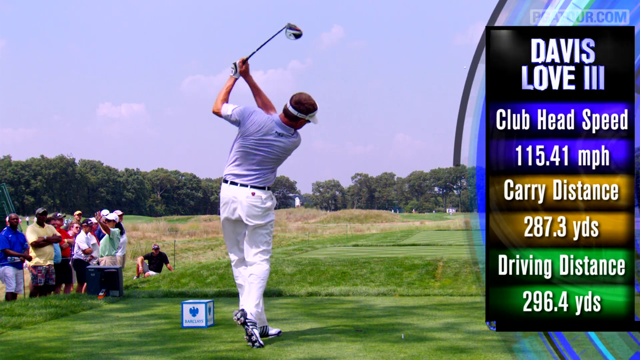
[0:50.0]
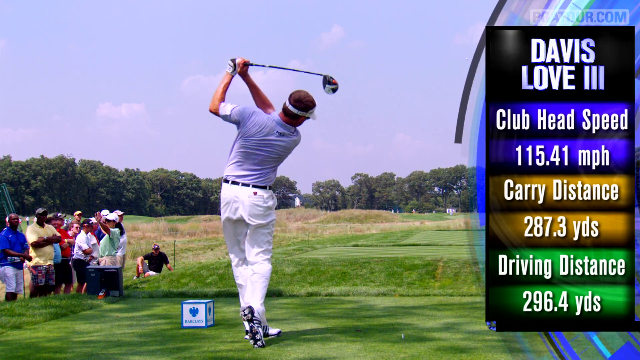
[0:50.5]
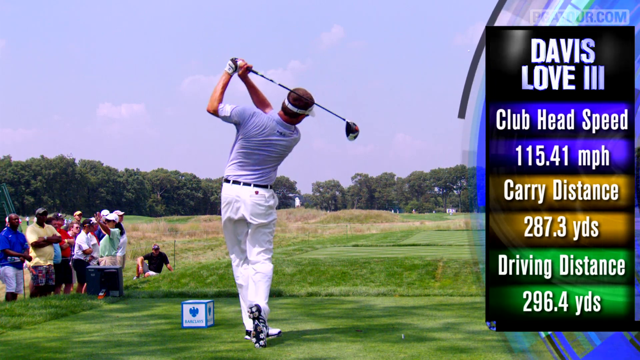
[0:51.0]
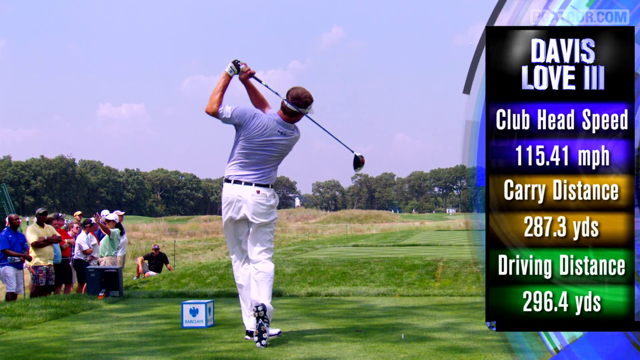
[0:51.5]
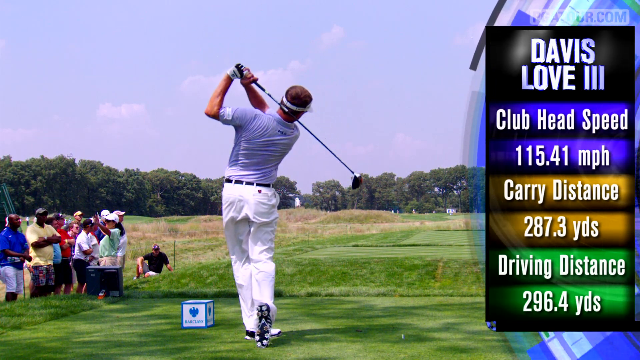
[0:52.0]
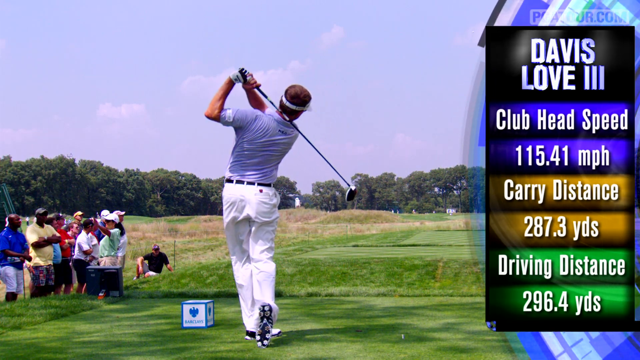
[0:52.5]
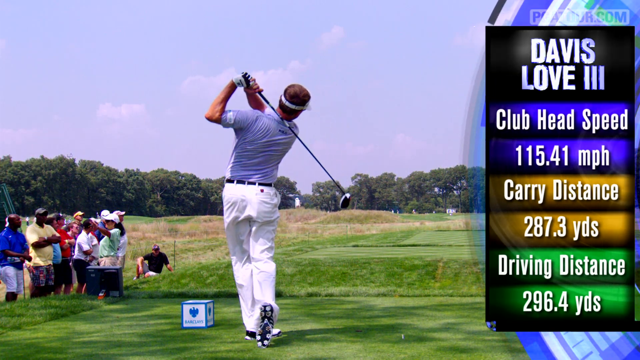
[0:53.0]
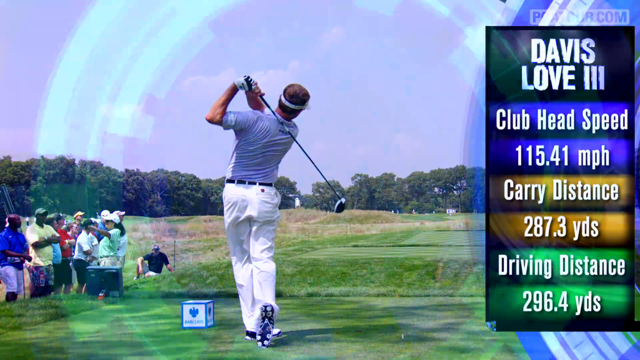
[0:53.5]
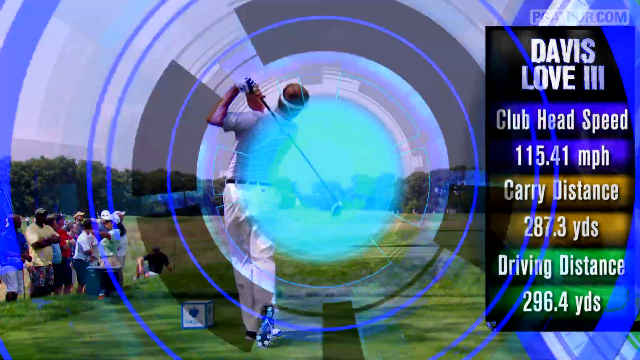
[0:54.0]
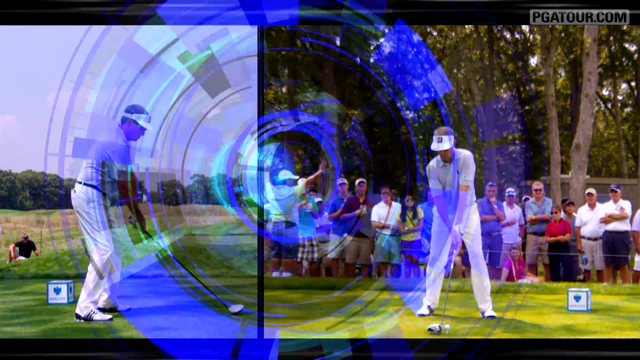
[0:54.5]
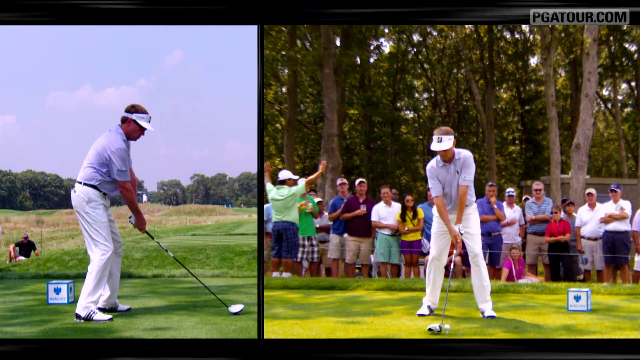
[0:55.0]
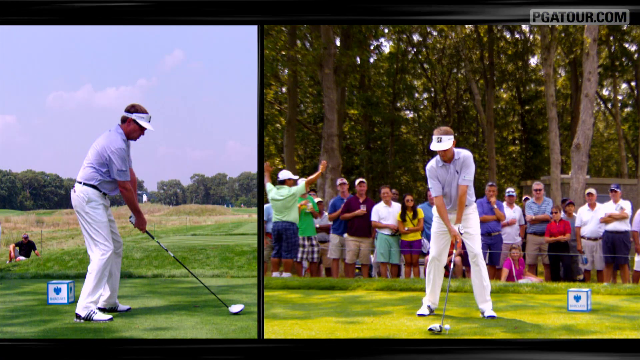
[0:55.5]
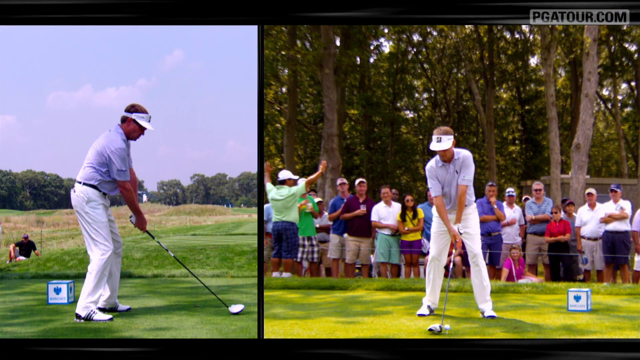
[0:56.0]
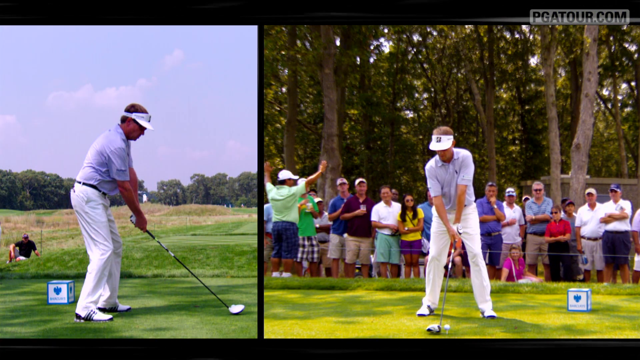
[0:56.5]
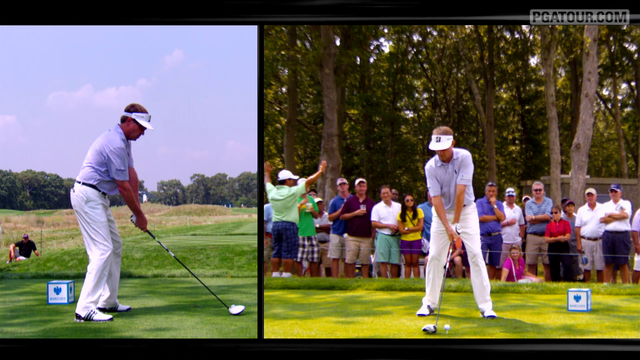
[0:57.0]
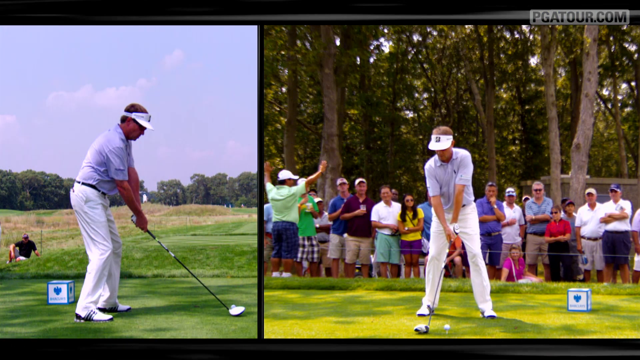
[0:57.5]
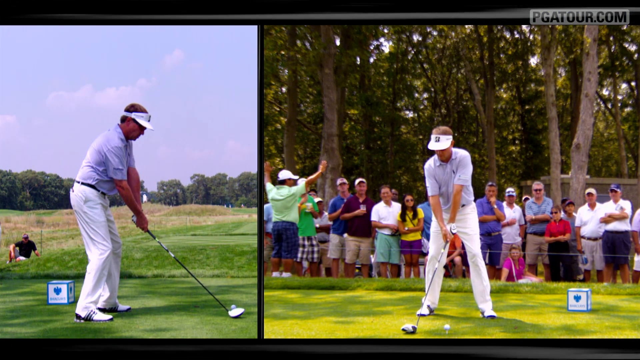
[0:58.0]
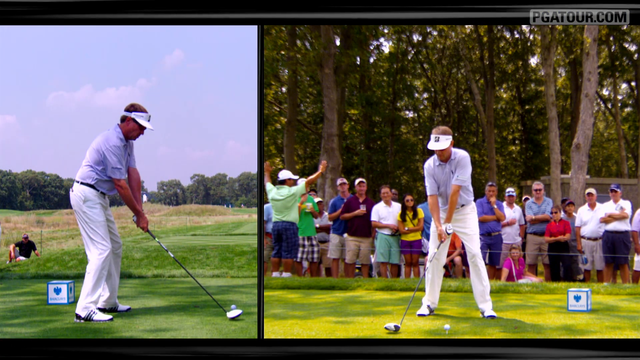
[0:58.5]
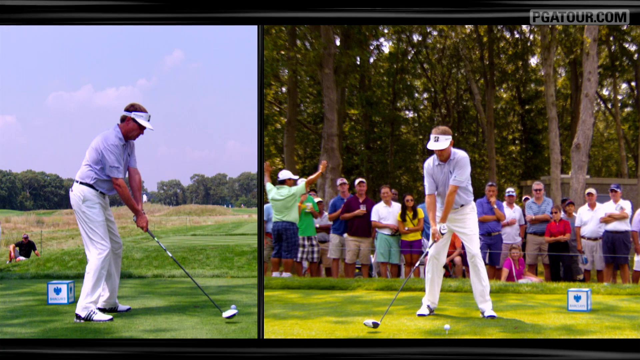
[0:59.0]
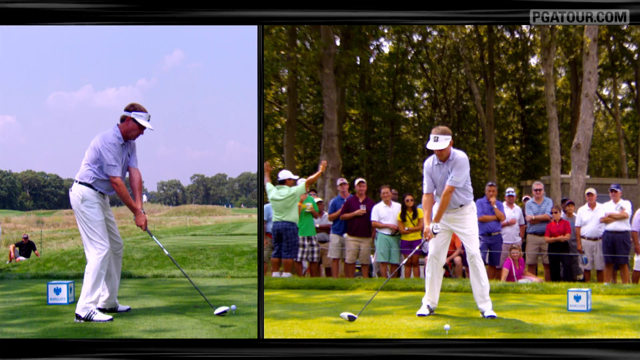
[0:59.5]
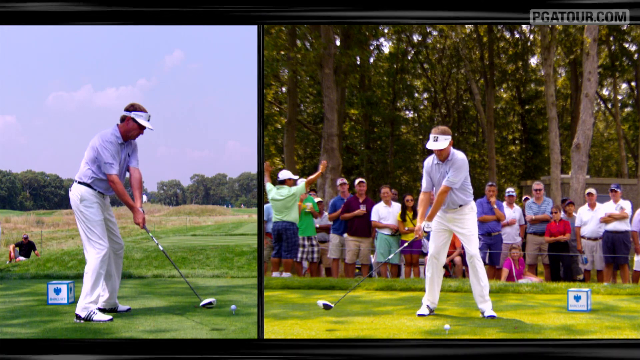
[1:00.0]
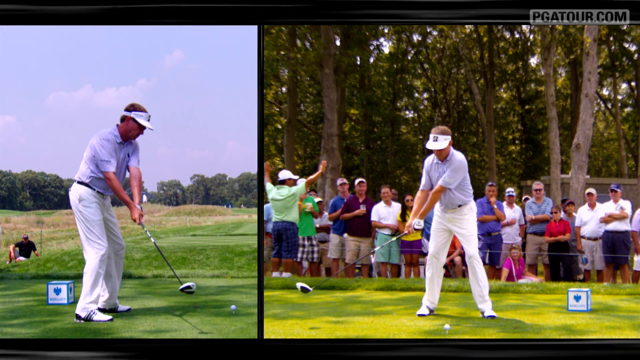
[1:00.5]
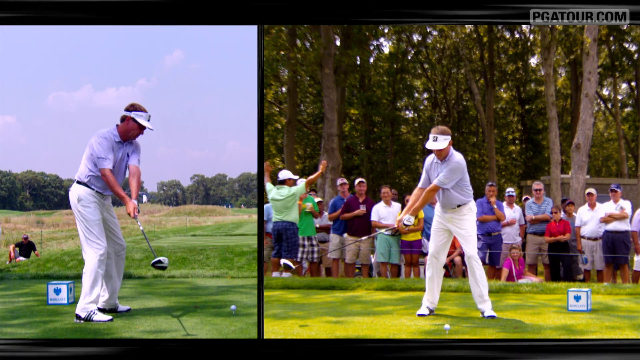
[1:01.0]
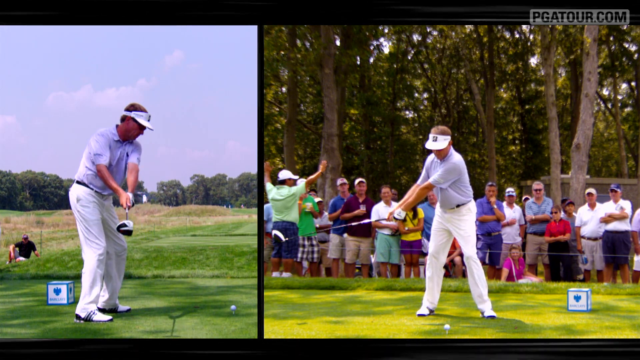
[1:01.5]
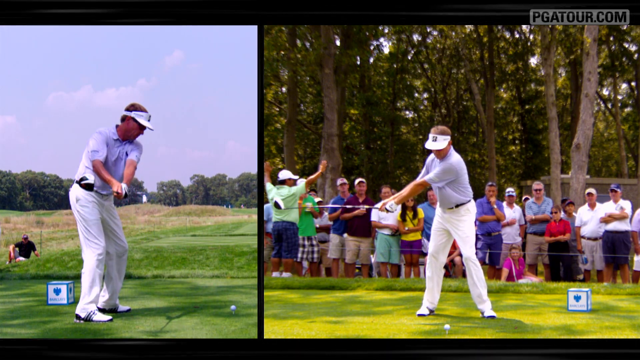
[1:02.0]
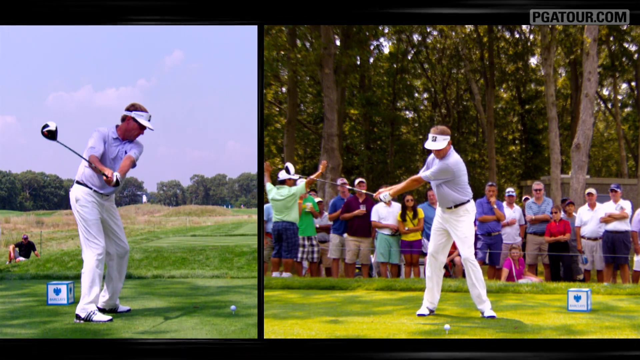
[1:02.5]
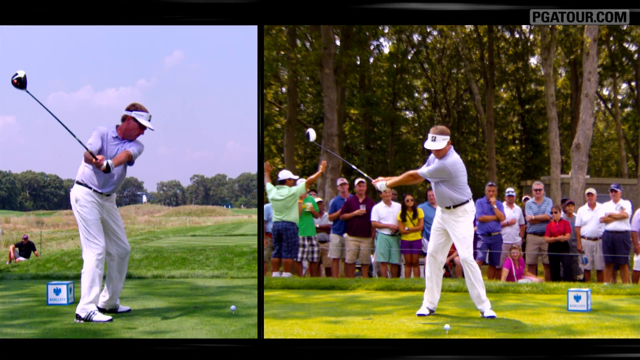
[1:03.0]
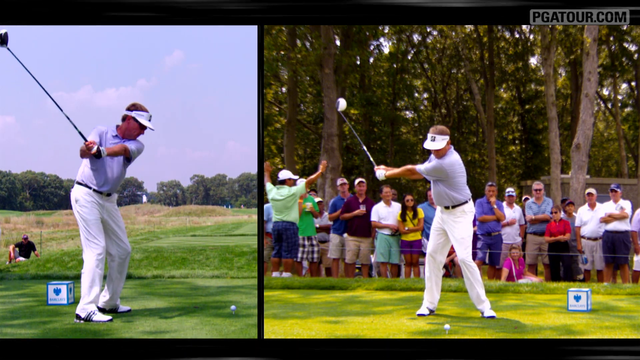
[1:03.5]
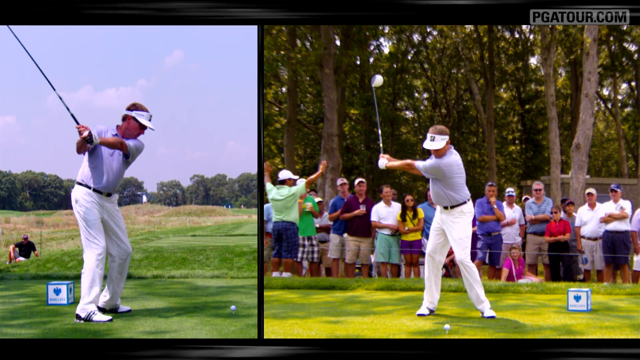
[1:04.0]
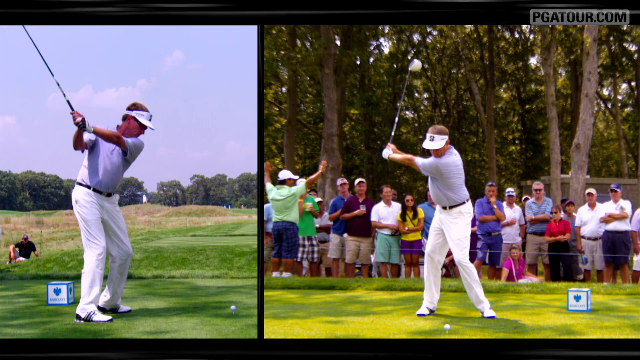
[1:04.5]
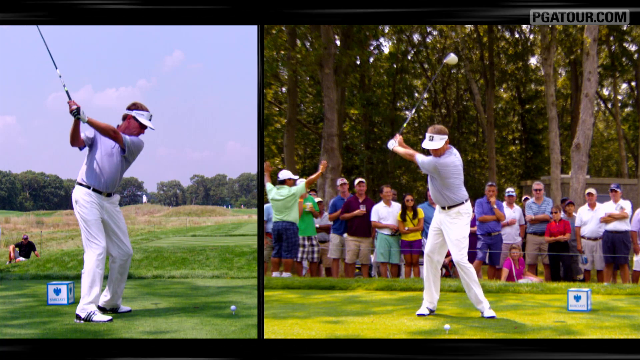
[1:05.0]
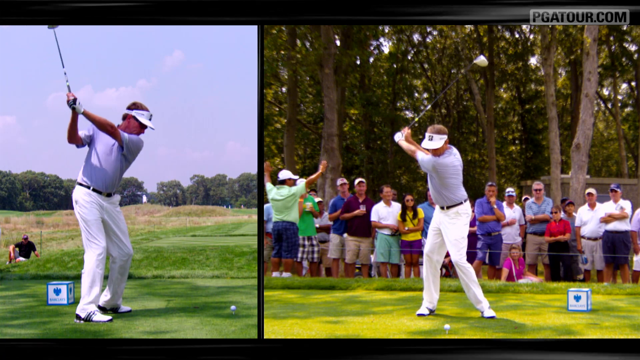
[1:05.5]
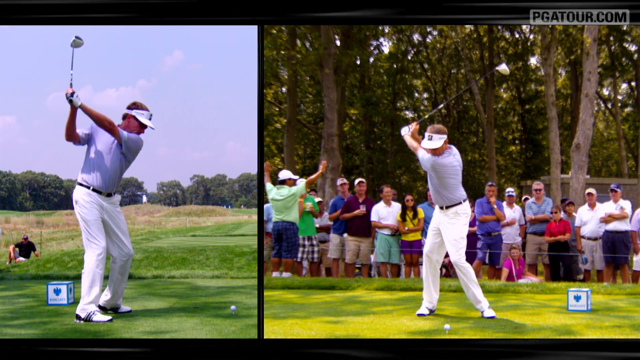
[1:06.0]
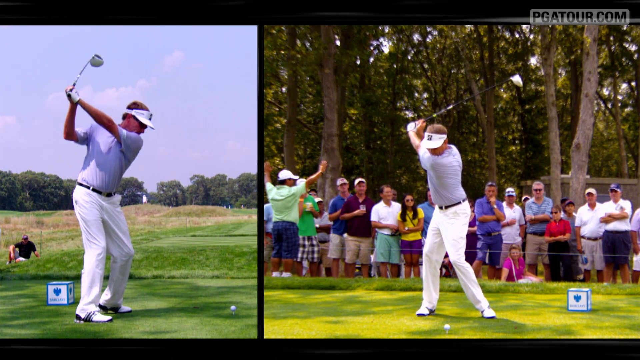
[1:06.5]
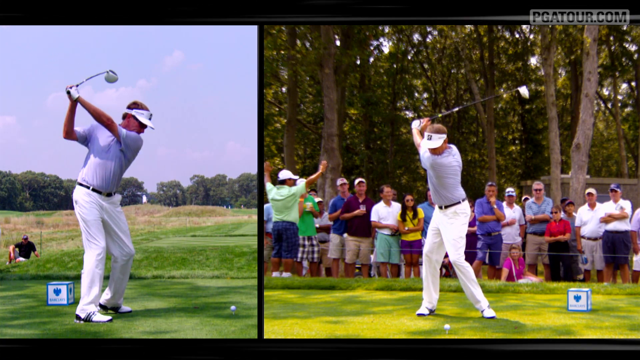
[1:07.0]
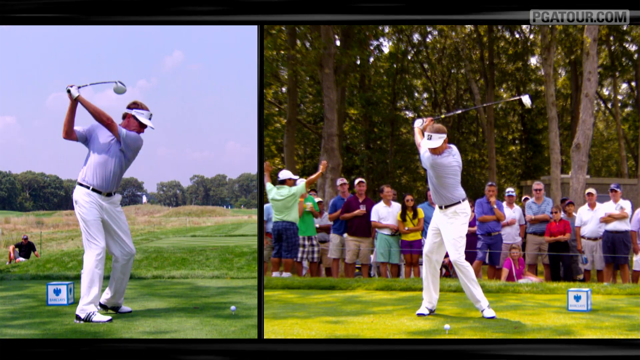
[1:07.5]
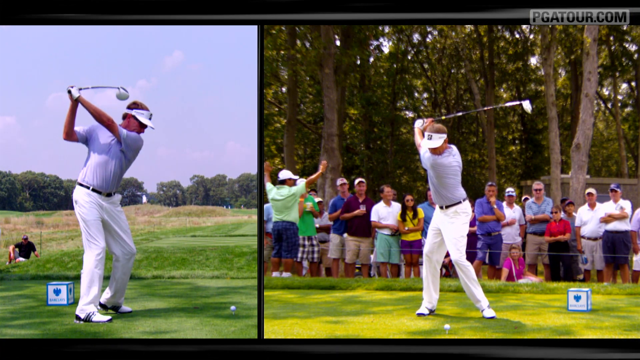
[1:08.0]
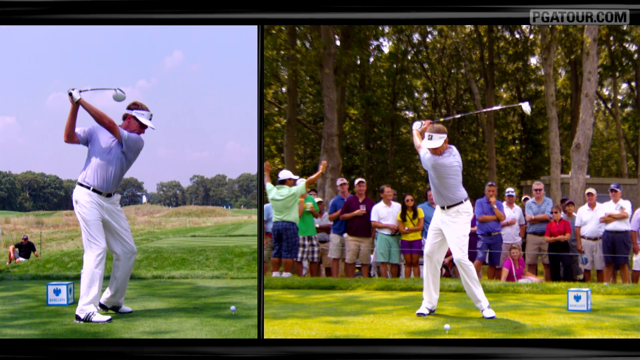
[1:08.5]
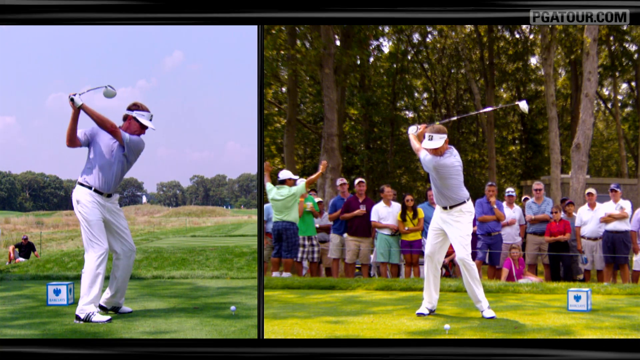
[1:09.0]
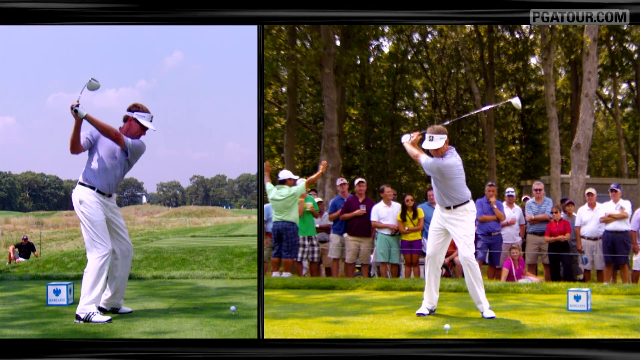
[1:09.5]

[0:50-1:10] The back end of the swing is shown, with the ball already launched. A blue animation transitions to a side-by-side shot of two frames: the left frame shows the angle from behind him and the right frame shows an angle from his side. Both show him in slow motion simultaneously as he swings his driver backwards. In the right frame, several audience members are behind him, the same ones as before, mostly older men with a few women mixed in.